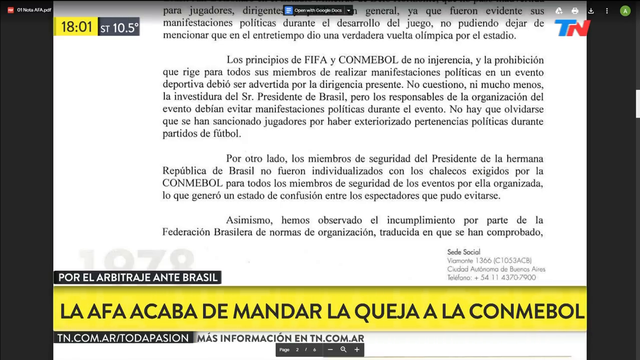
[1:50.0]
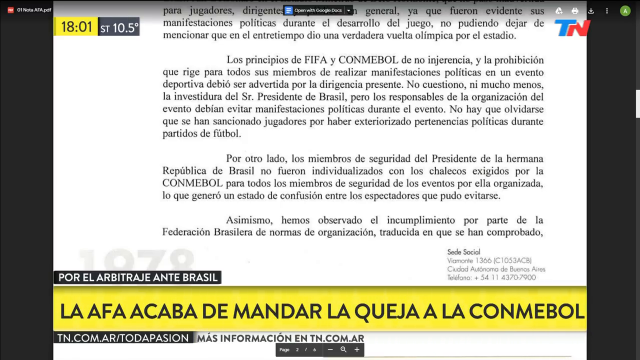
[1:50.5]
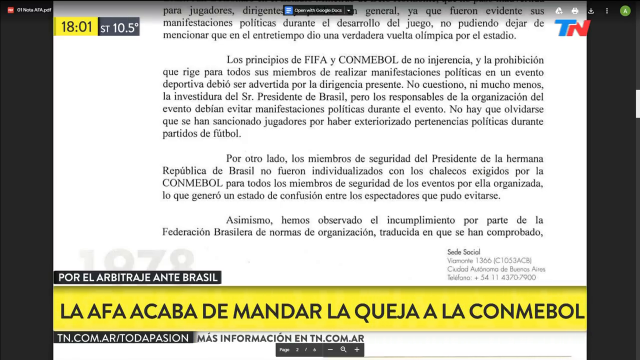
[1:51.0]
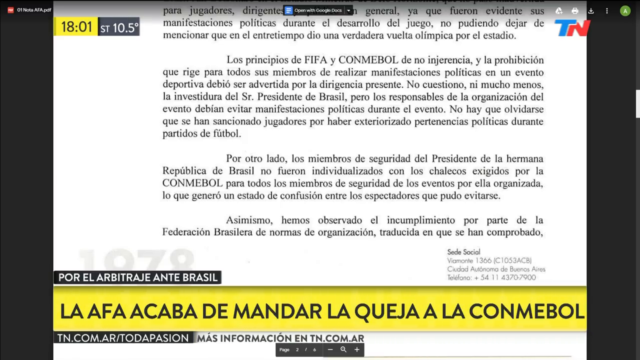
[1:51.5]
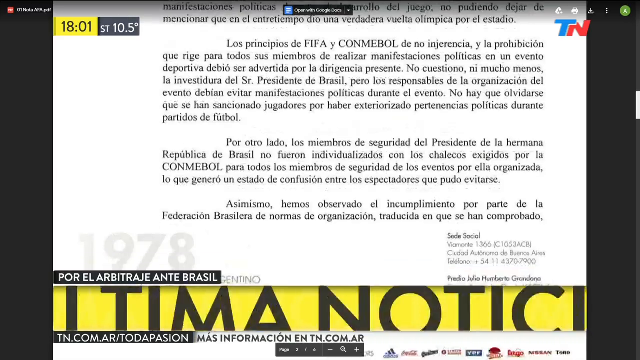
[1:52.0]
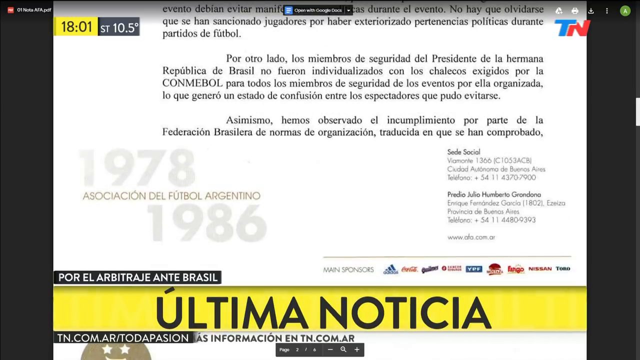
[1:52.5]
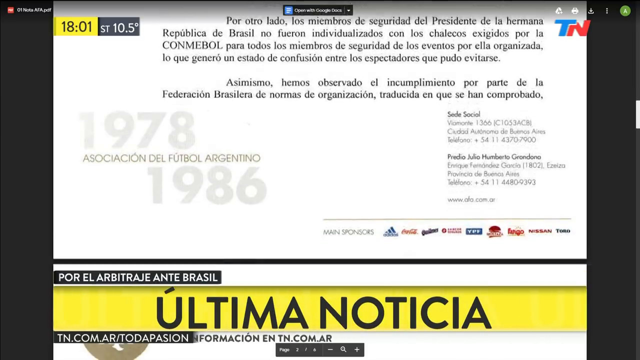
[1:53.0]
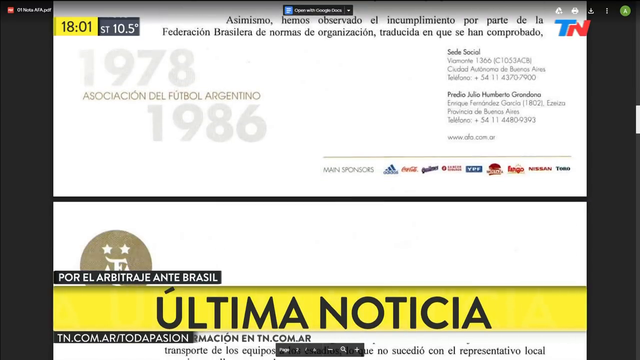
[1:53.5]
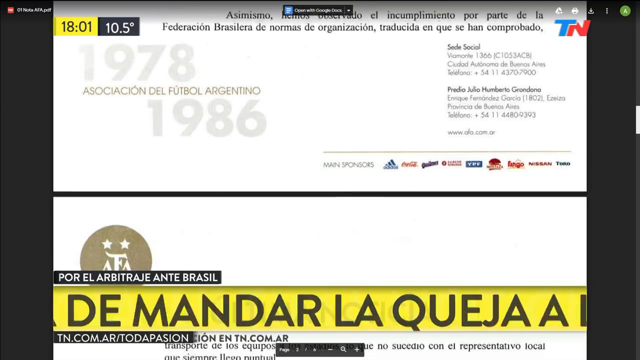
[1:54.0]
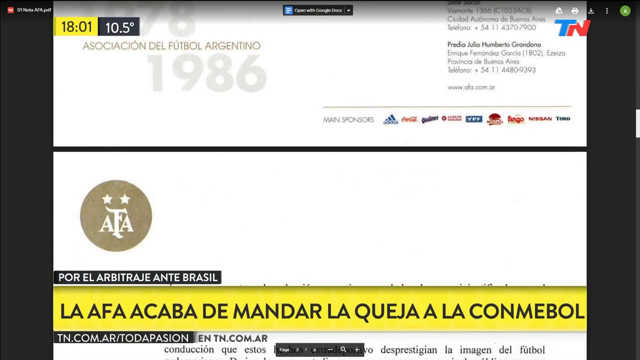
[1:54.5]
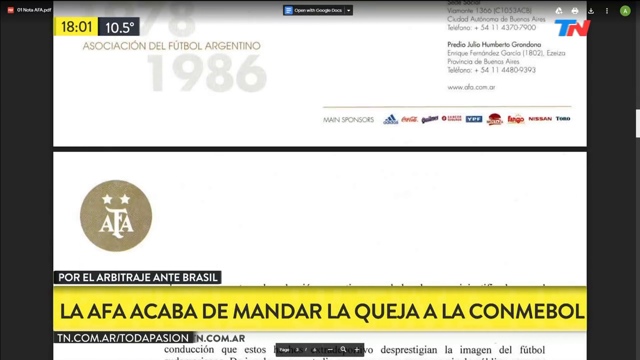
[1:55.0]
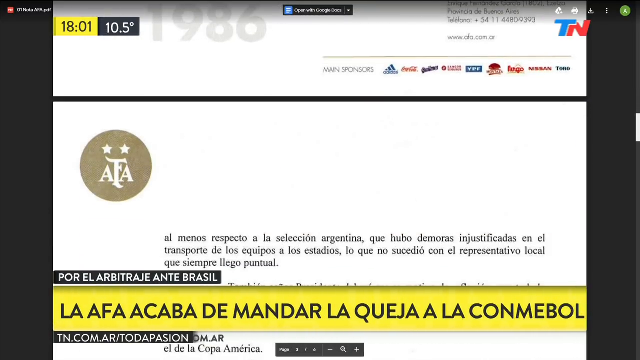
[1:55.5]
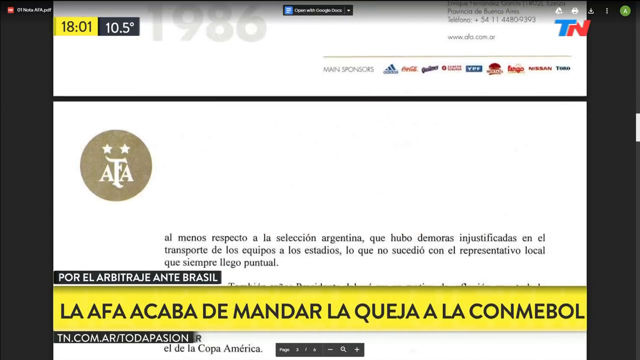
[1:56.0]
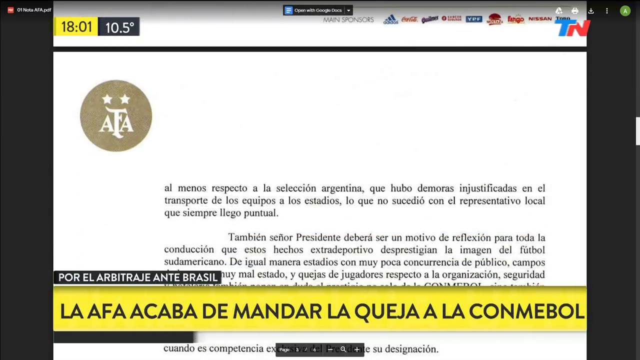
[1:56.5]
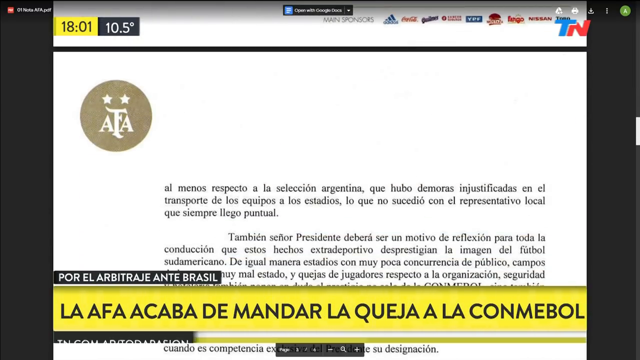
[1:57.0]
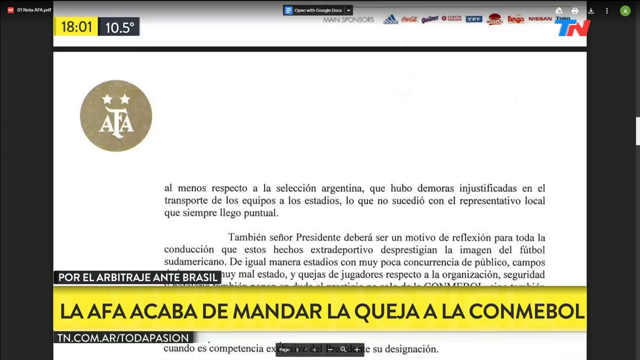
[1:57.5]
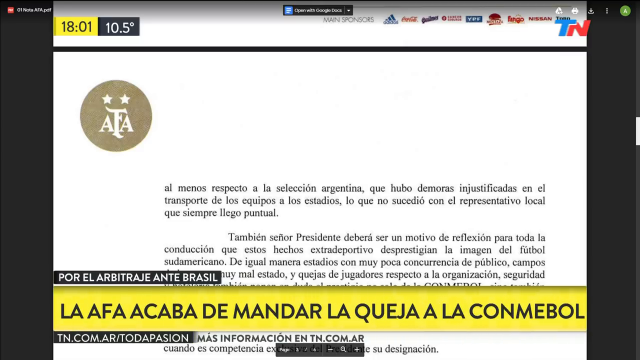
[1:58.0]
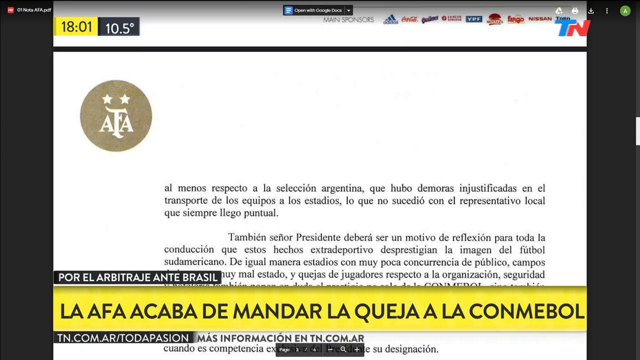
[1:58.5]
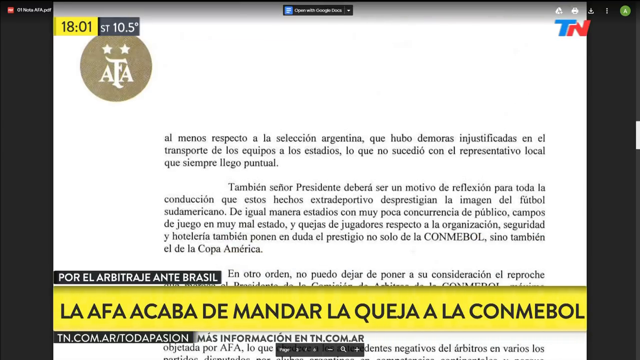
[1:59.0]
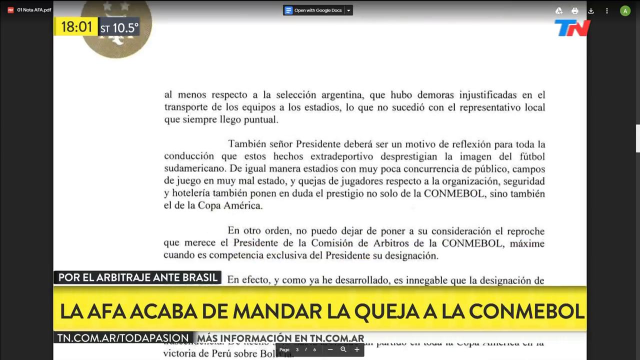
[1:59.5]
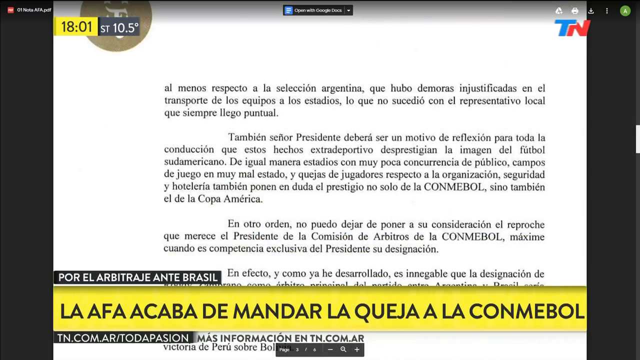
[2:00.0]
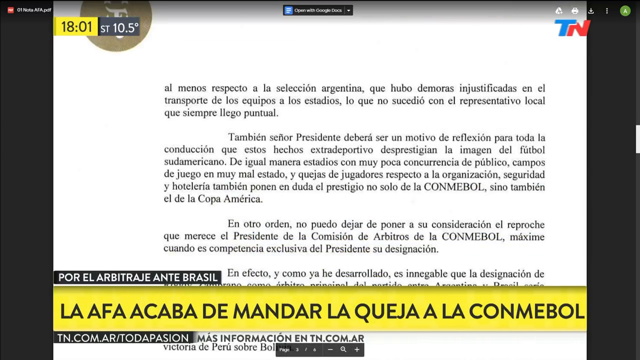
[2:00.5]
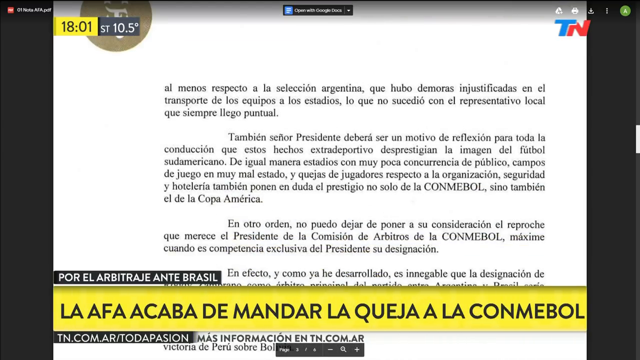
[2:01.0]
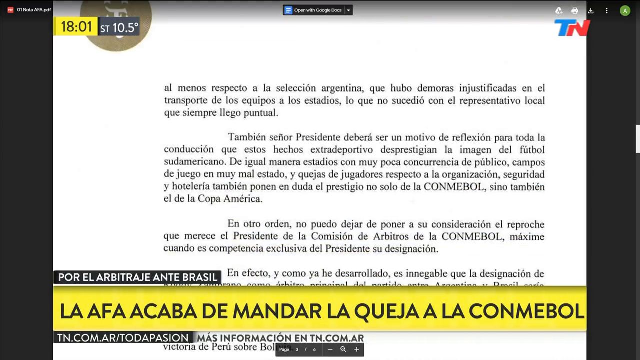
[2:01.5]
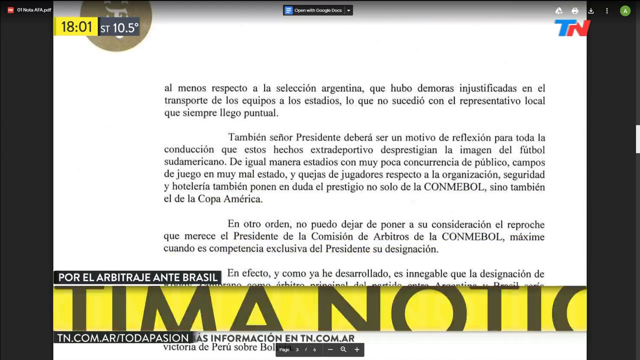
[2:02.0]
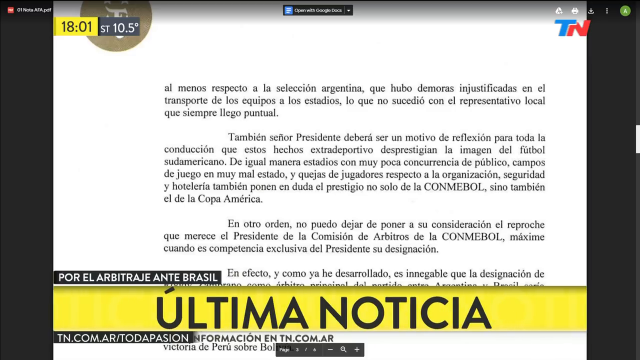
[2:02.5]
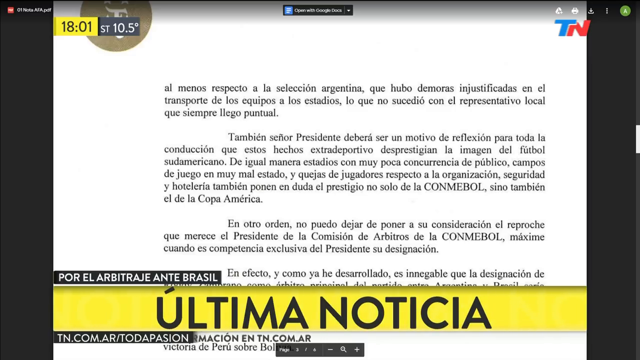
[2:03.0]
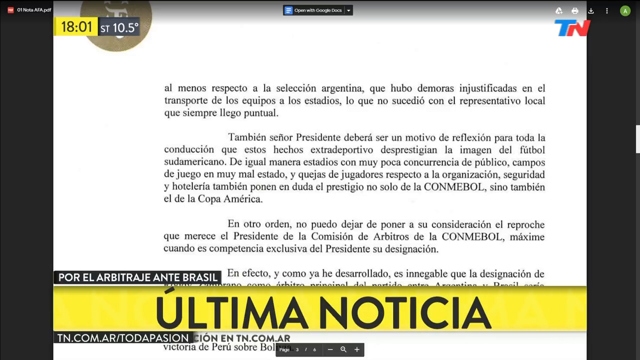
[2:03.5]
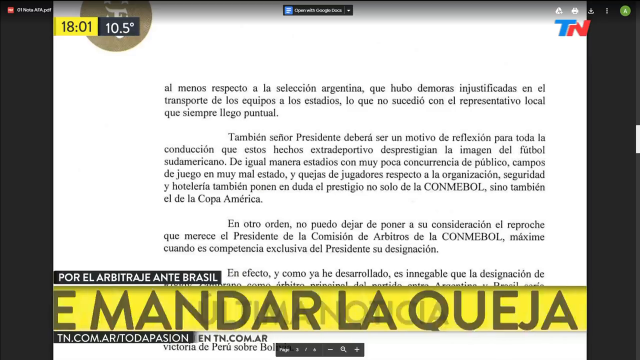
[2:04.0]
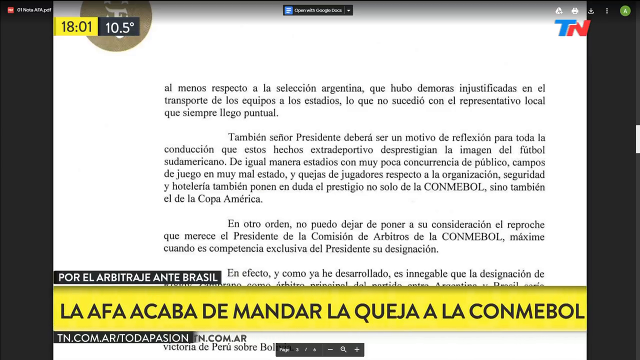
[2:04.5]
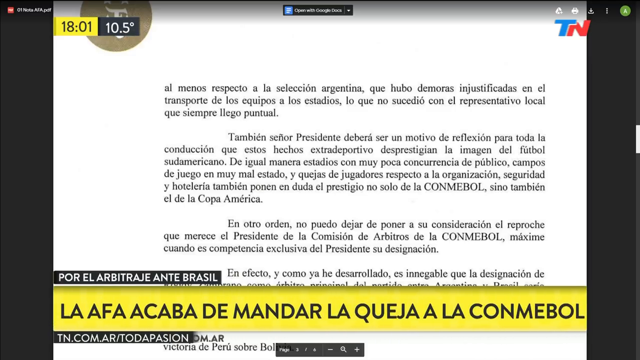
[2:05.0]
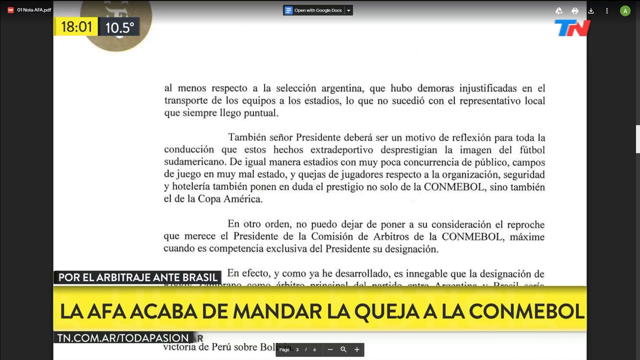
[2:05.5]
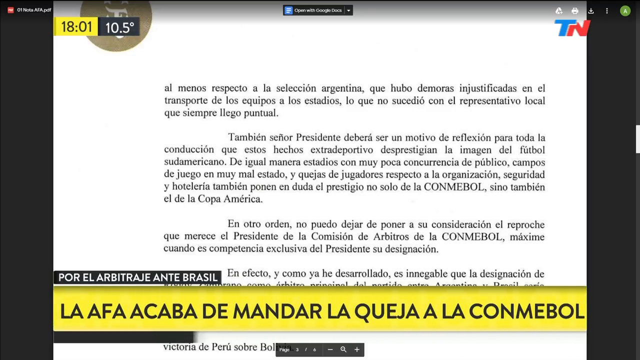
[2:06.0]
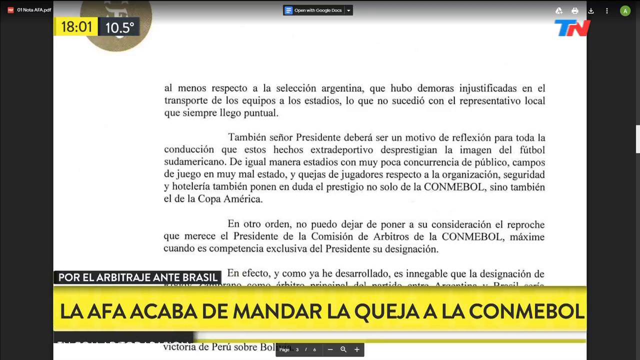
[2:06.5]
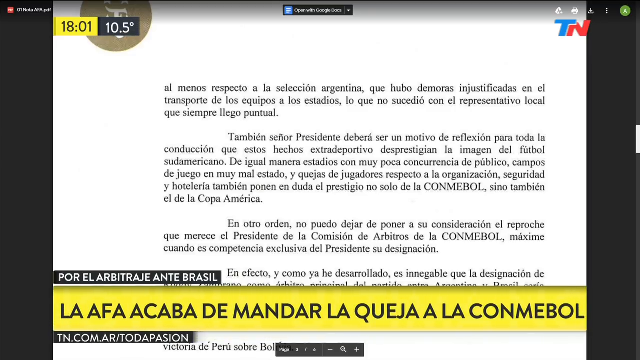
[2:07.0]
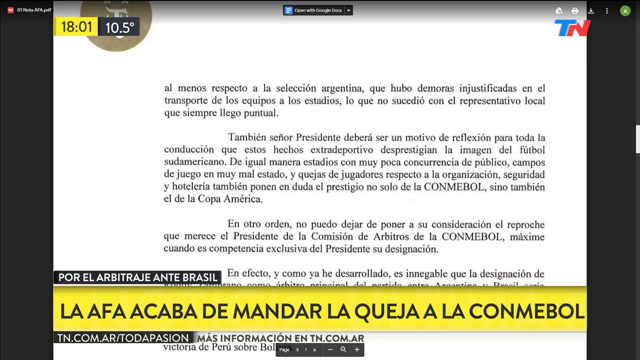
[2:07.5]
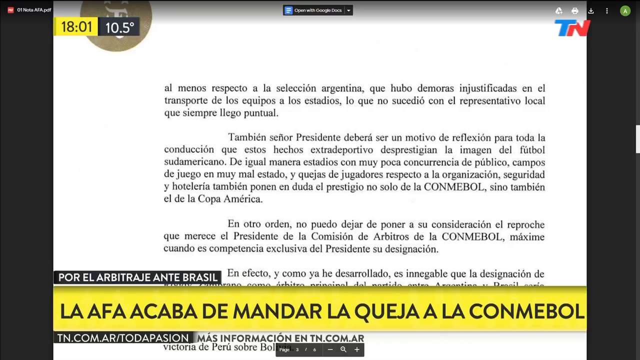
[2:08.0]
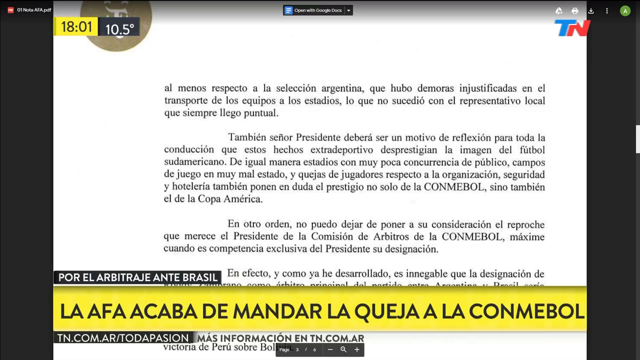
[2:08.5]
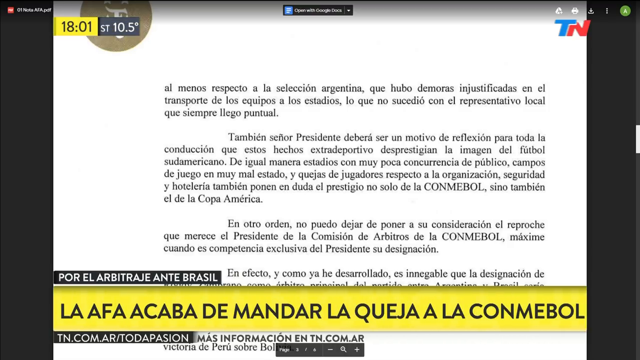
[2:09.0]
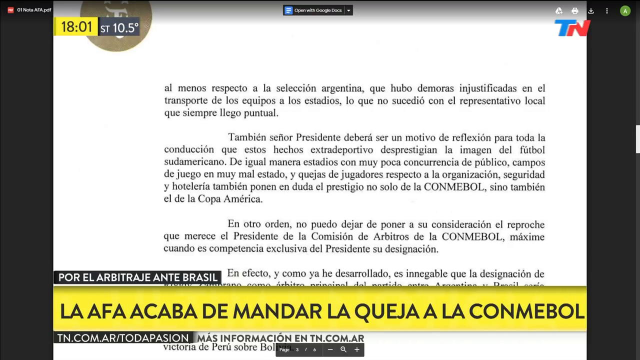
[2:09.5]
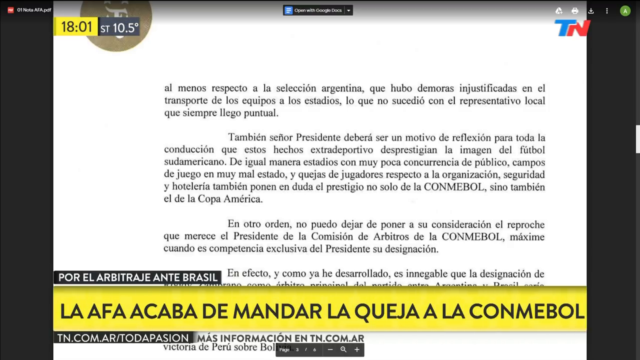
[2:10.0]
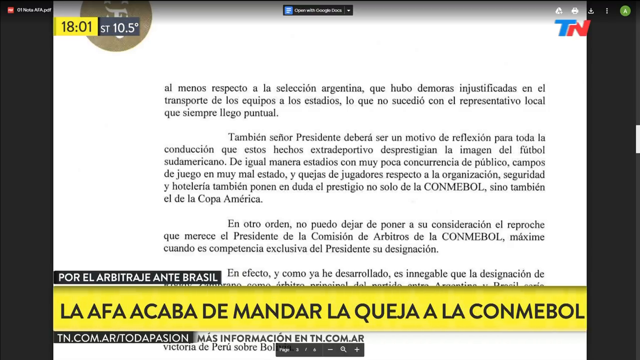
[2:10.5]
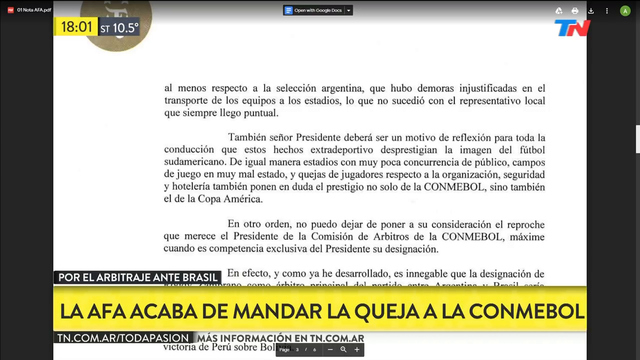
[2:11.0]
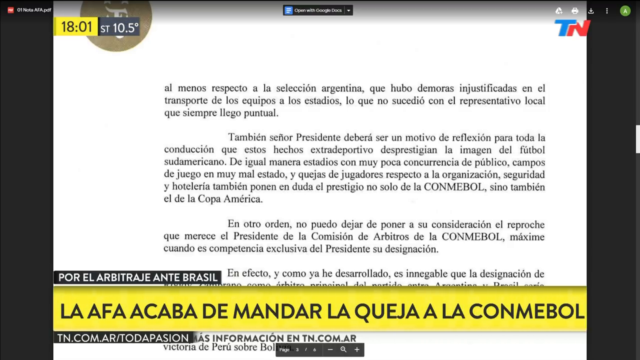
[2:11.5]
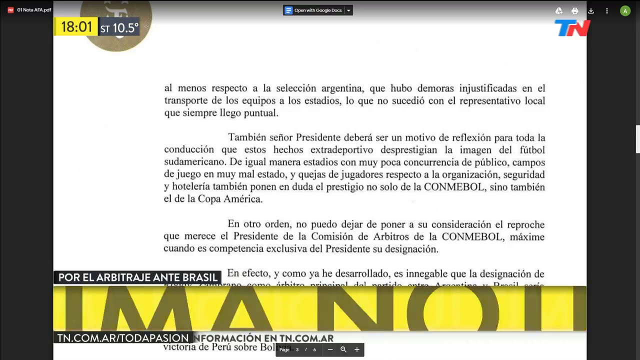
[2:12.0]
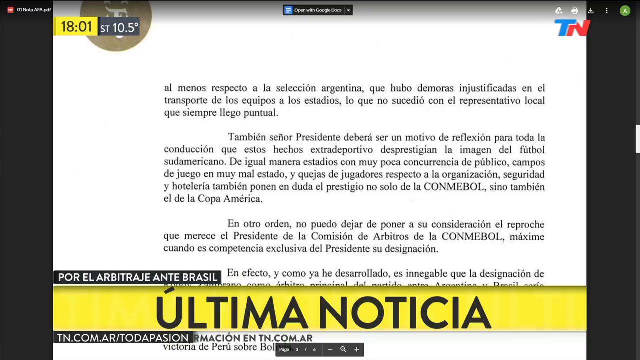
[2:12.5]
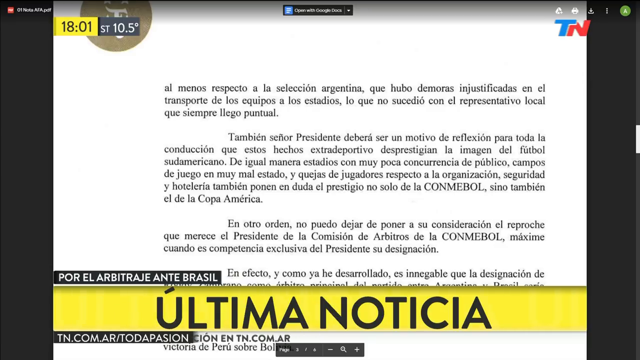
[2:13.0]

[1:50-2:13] The words "Ultima Noticia" keep appearing on the screen. There are a number of paragraphs written in Portuguese on a letter with a letterhead at the top that says "AFA." It is unclear whether this is on a website or part of some sort of newscast.